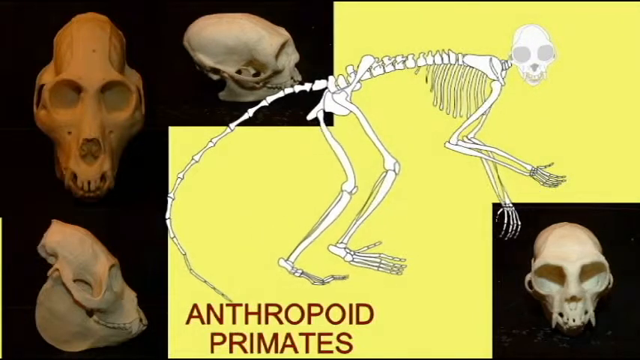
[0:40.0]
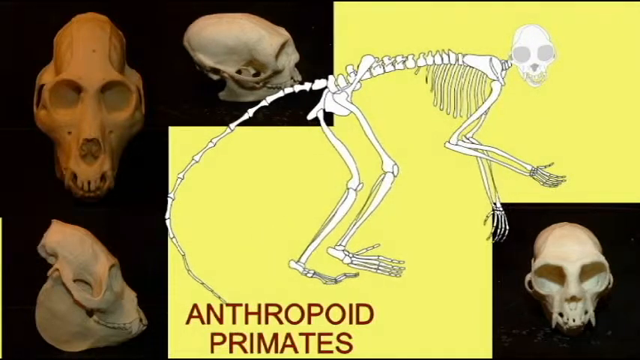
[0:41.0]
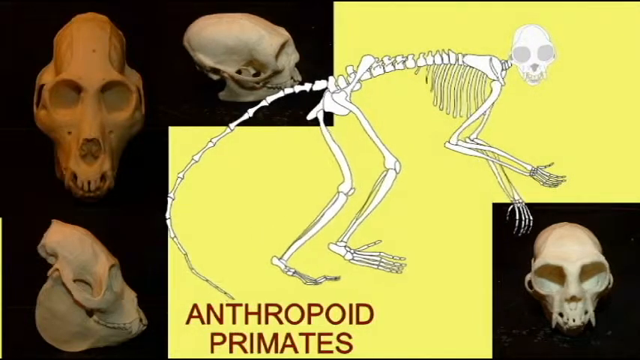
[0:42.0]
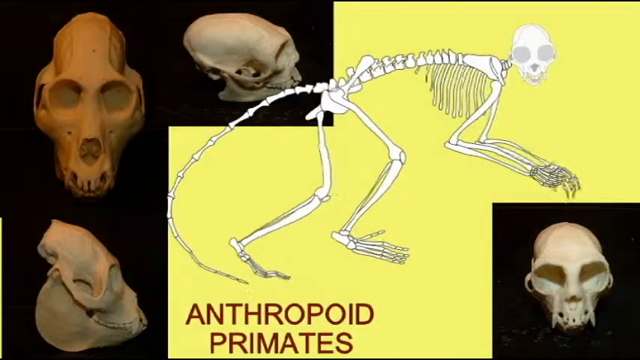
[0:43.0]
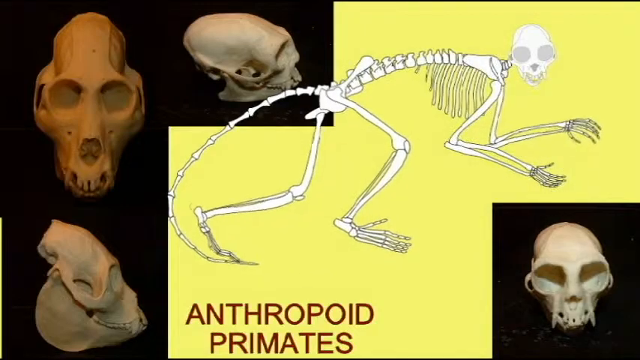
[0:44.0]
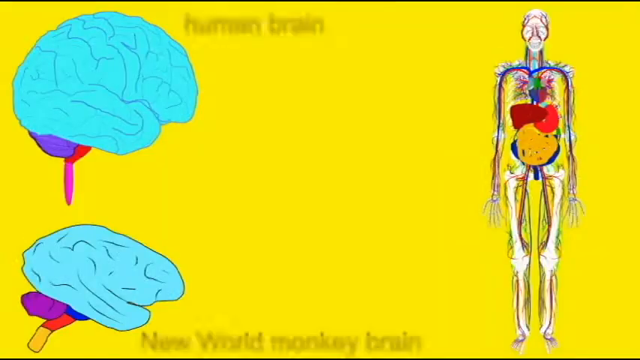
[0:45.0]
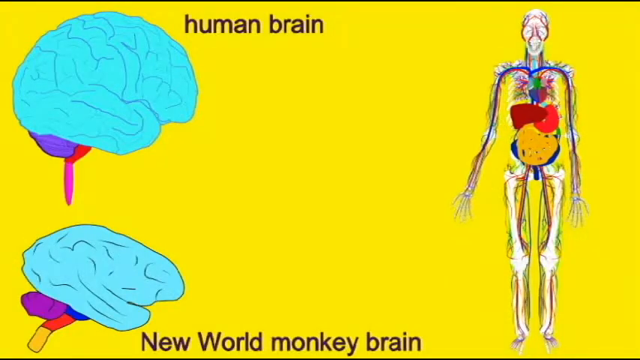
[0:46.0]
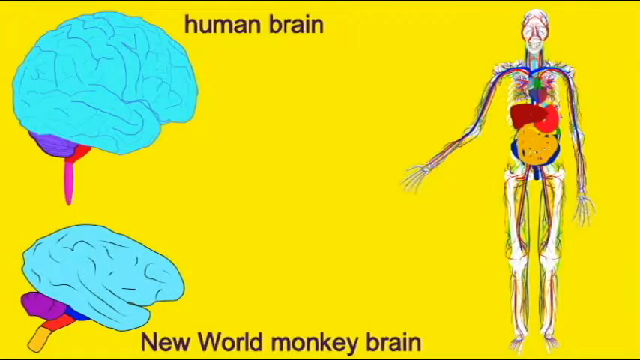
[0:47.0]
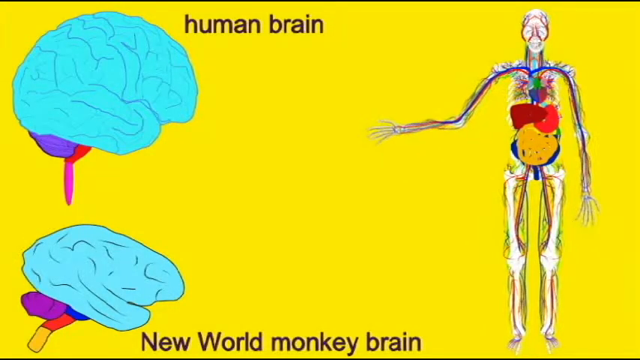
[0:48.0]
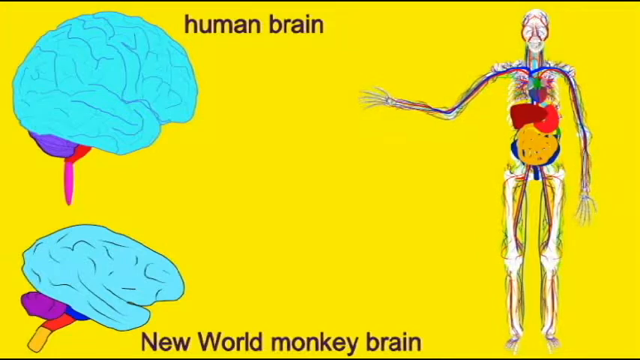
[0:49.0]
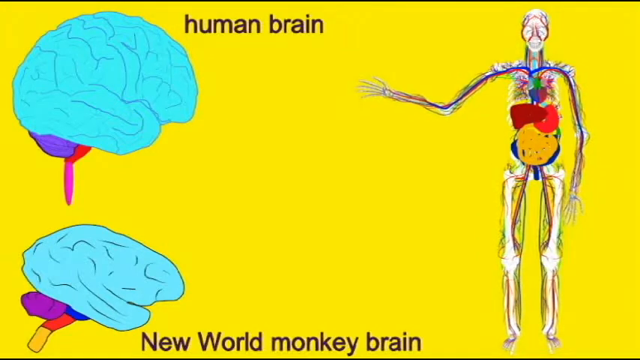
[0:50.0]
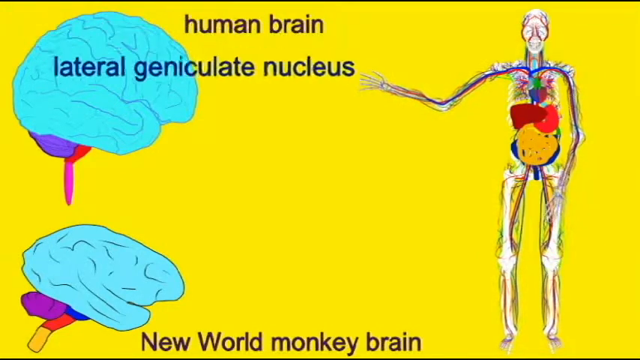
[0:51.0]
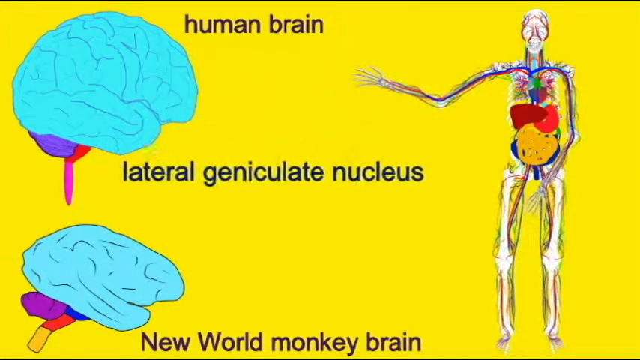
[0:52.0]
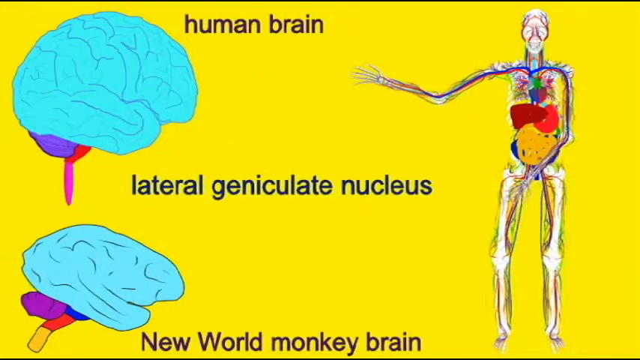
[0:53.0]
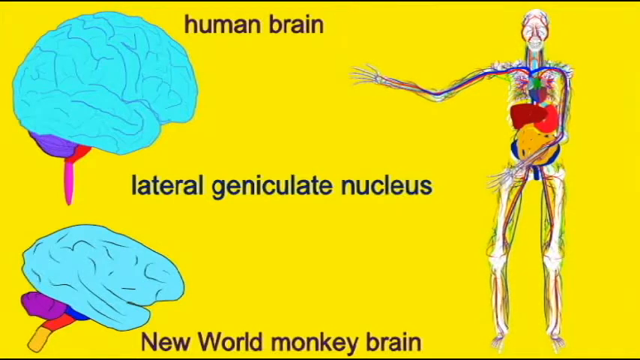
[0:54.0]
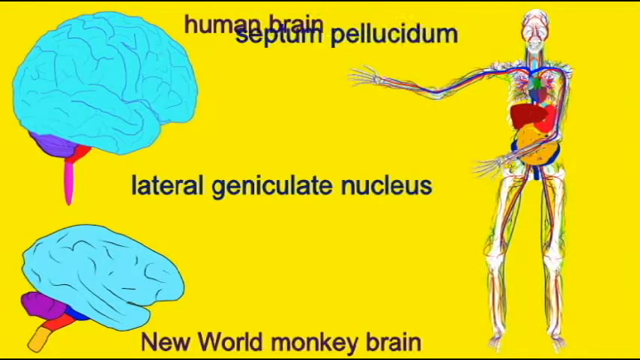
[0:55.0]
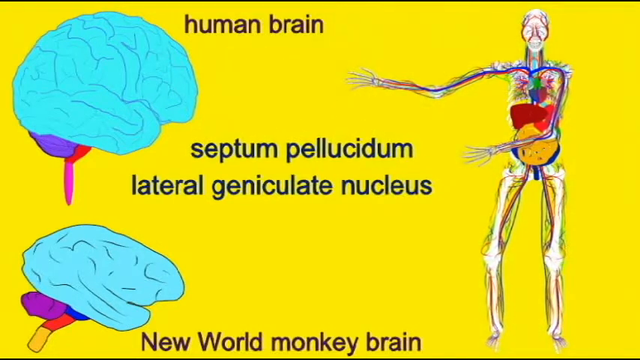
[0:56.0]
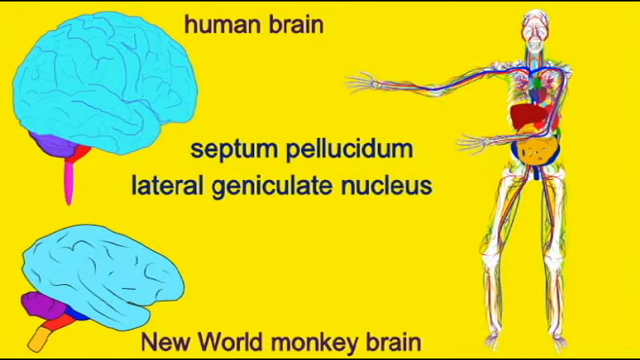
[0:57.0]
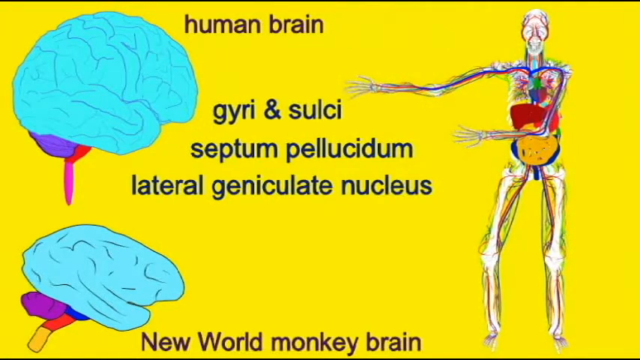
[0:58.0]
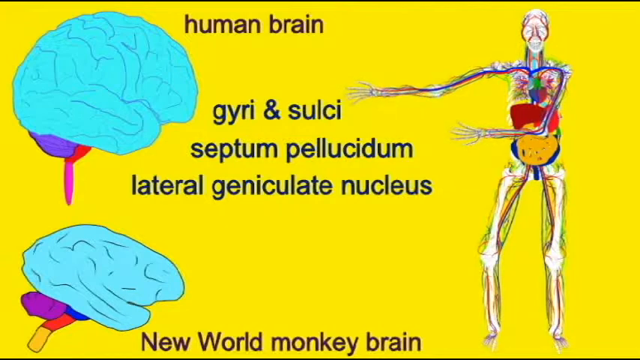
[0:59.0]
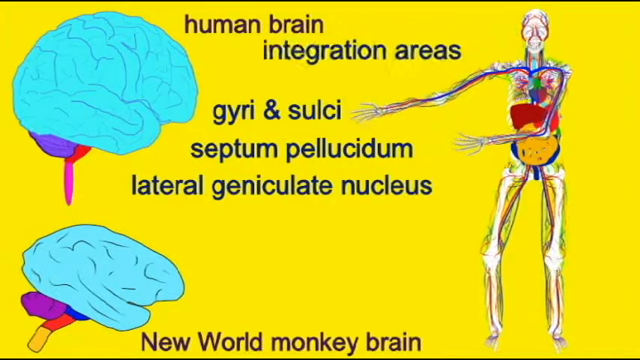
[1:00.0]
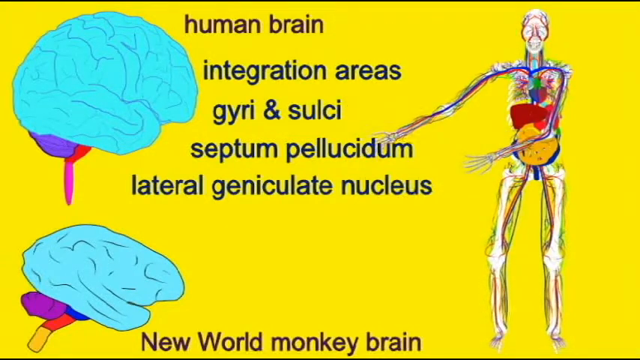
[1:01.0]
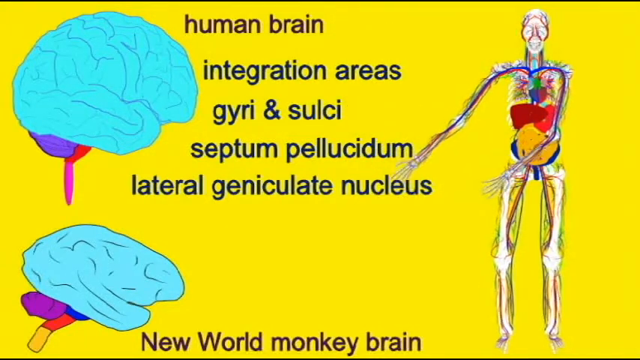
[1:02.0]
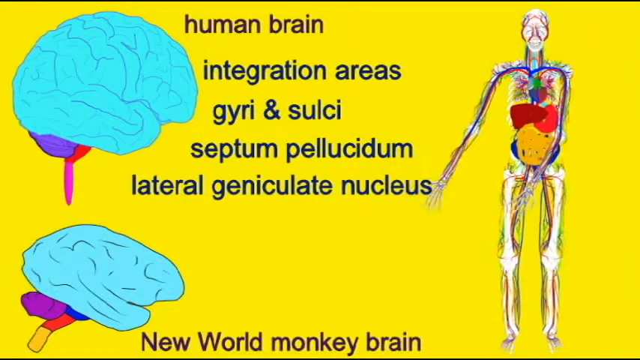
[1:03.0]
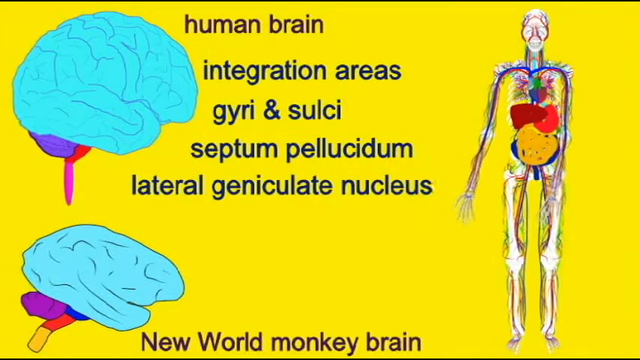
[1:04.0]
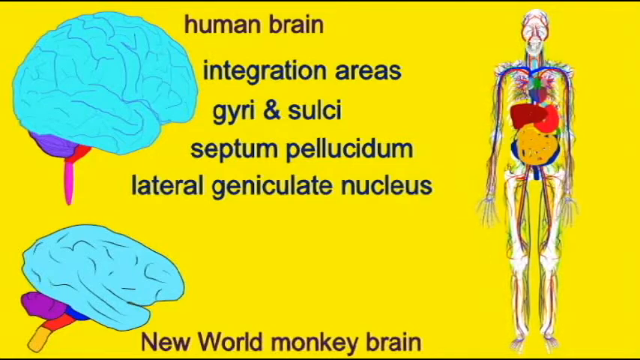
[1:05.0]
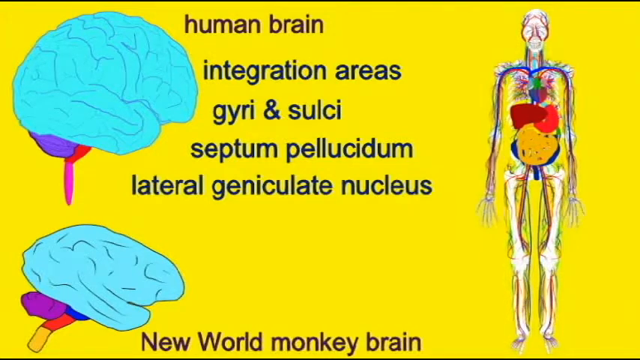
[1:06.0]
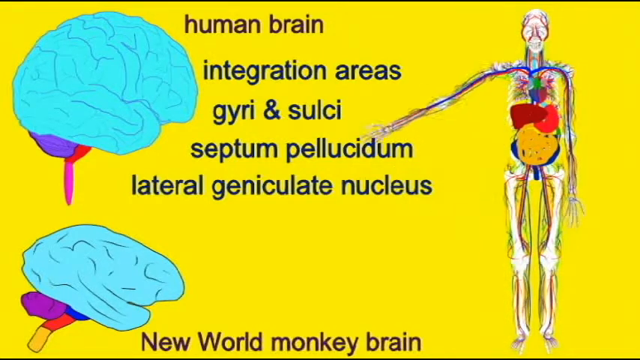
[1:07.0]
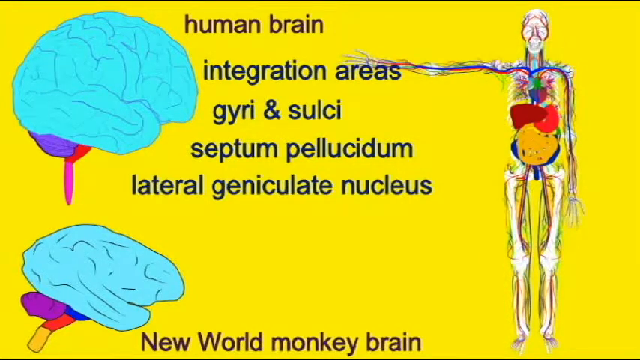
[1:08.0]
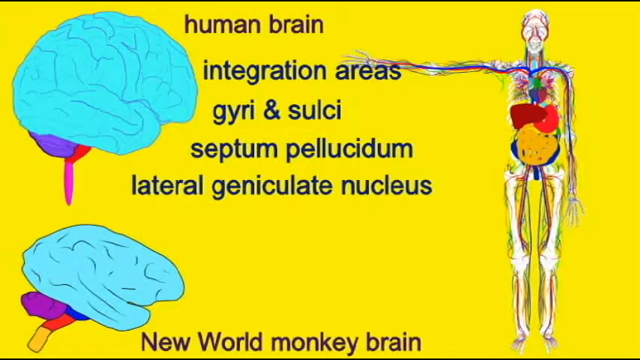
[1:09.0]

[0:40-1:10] The yellow screen continues with the animal skeleton in the middle and the four skulls: one in the bottom right corner and three running from the top left corner down across the screen. The text still reads "Anthropod primates," and the middle skeleton keeps moving its hands up and down along with its tail. The video then cuts to a new screen in a brighter shade of yellow, with two images of brains on the left-hand side and an image of a skeleton with nerves on the right-hand side. At the top left, next to one of the brains, text reads "human brain." The skeleton figure points to the left-hand side of the screen, and new text reading "lateral geniculate nucleus" appears in the middle of the screen as it transitions. More text appears below it and above it with different information. The skeletal figure keeps moving its hands up and down across the text, as if it is talking to the viewer directly.